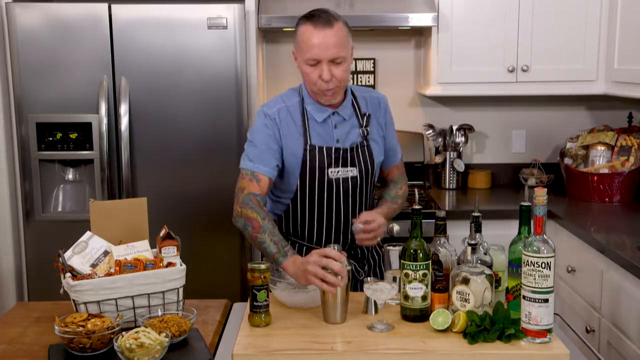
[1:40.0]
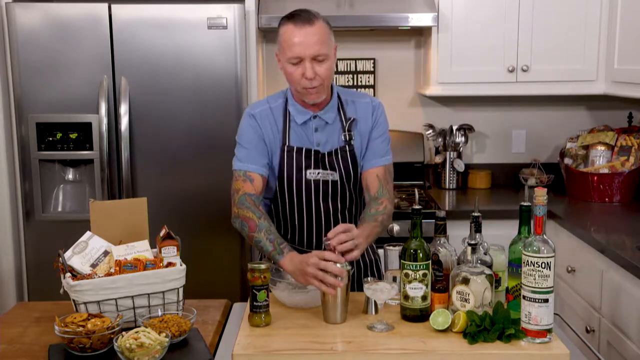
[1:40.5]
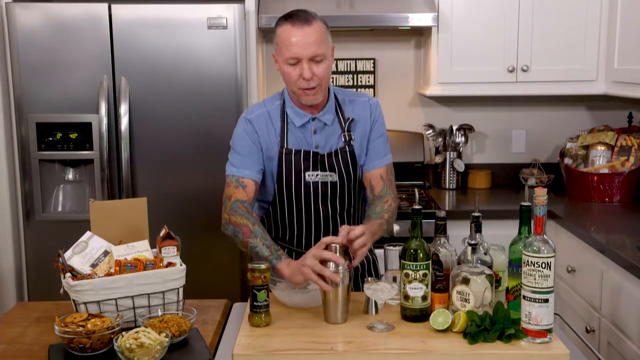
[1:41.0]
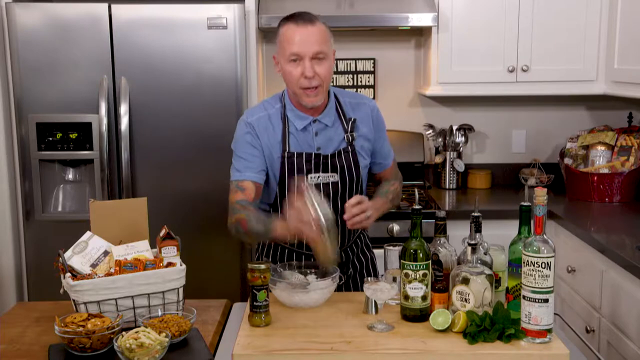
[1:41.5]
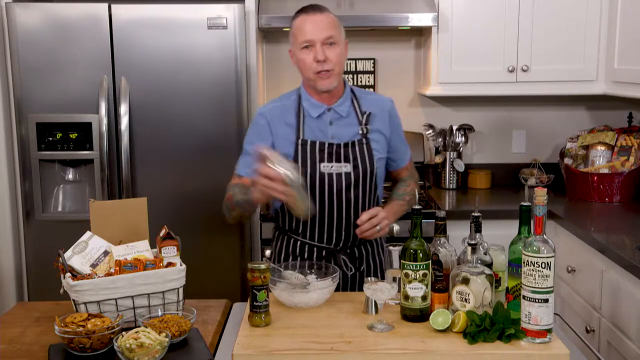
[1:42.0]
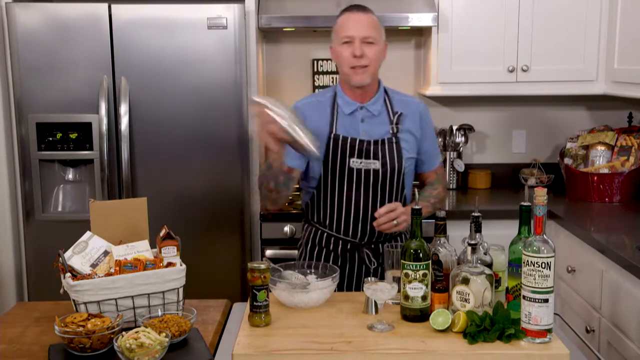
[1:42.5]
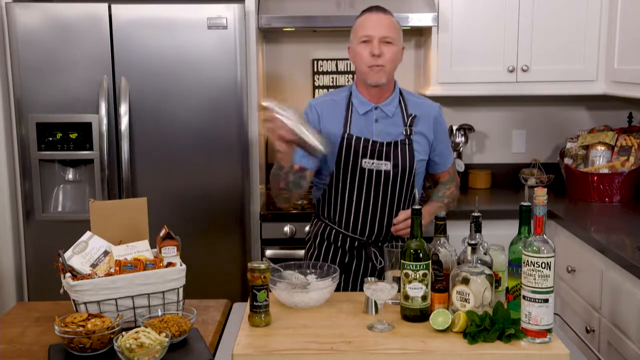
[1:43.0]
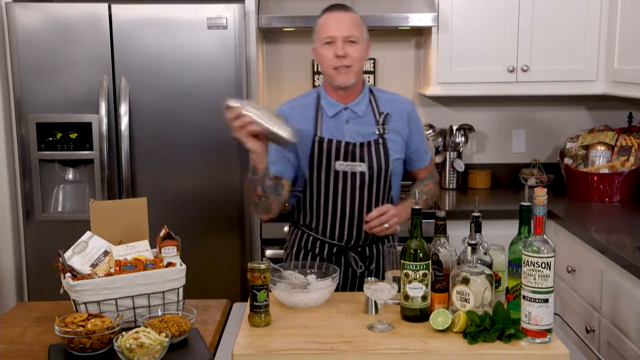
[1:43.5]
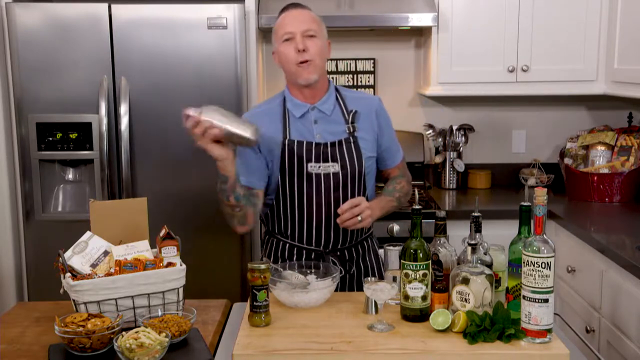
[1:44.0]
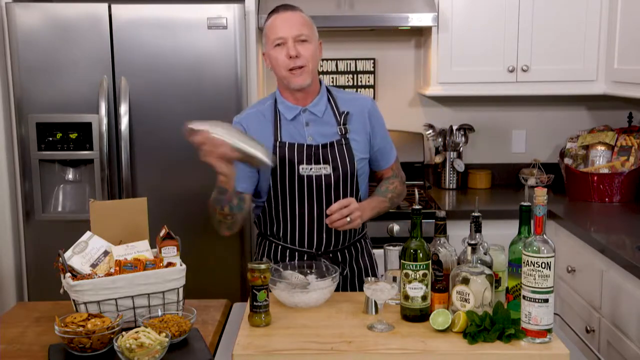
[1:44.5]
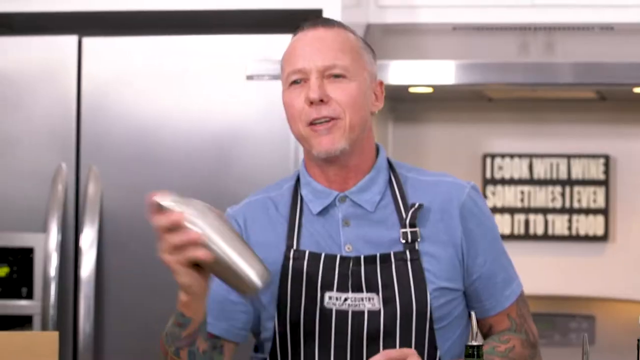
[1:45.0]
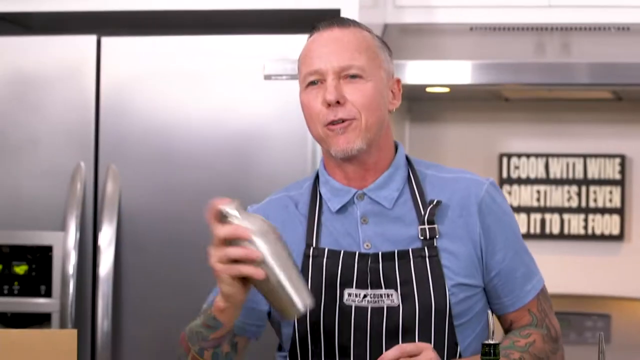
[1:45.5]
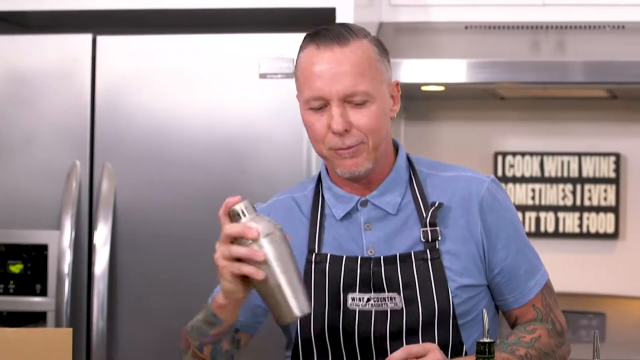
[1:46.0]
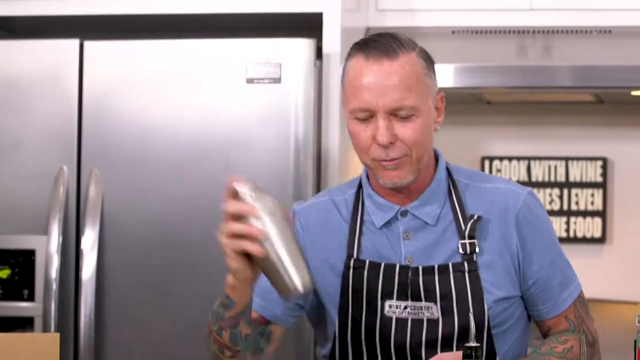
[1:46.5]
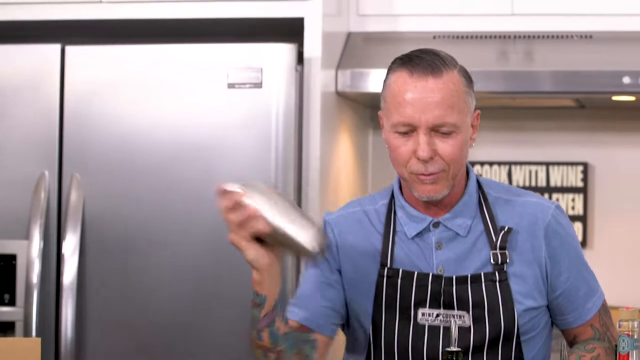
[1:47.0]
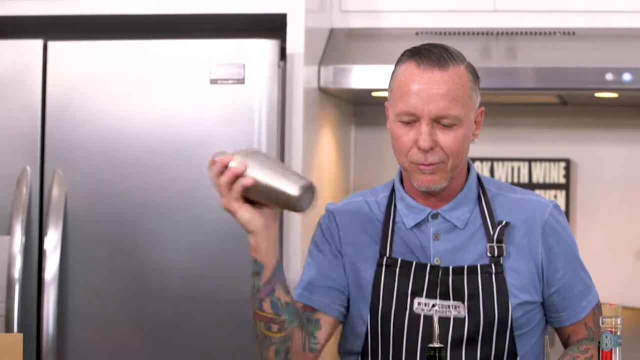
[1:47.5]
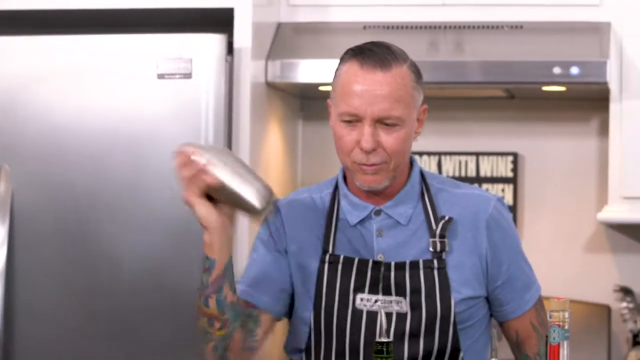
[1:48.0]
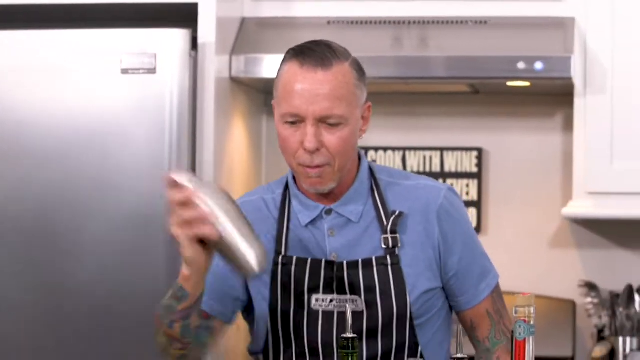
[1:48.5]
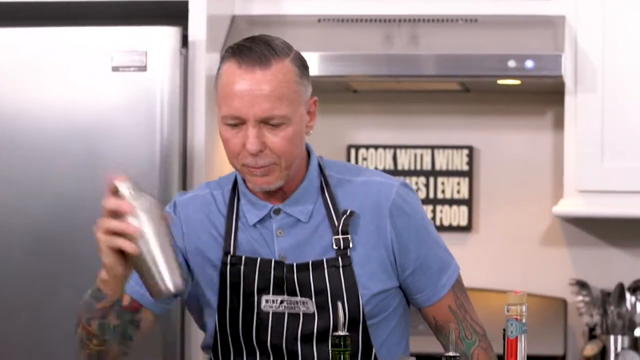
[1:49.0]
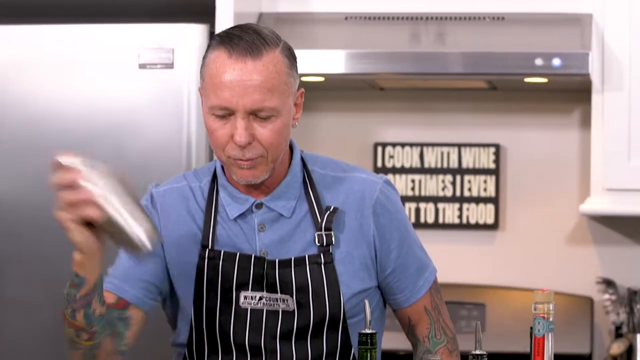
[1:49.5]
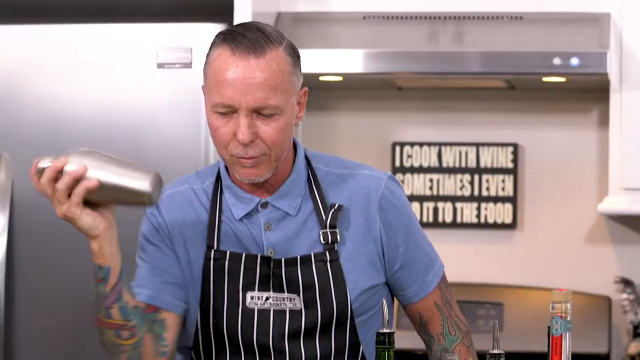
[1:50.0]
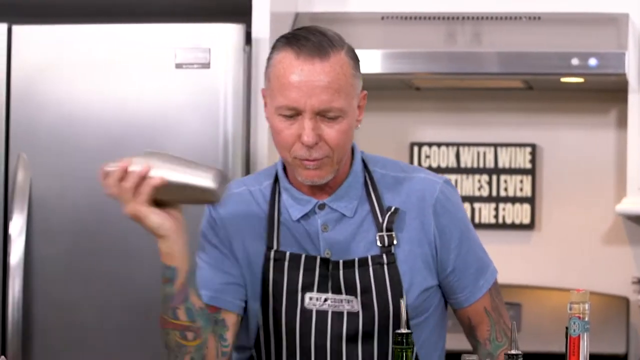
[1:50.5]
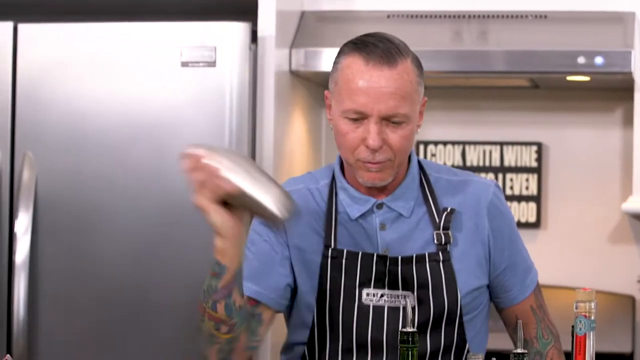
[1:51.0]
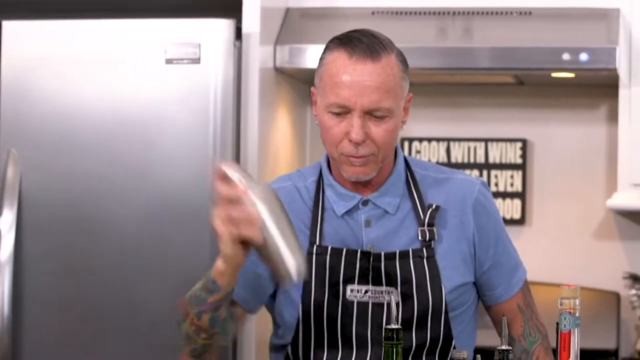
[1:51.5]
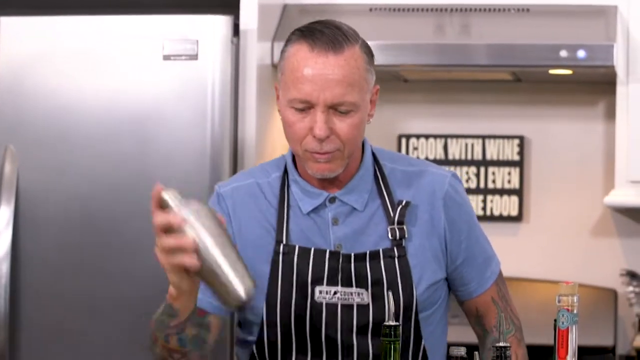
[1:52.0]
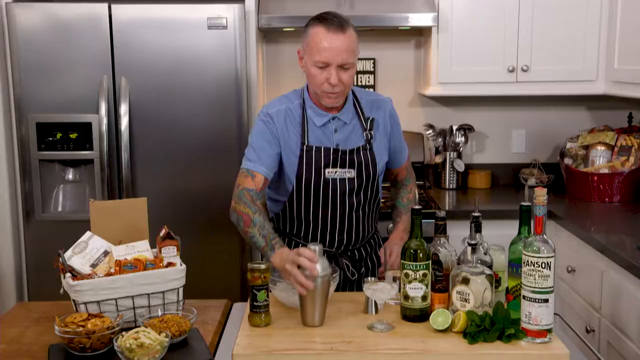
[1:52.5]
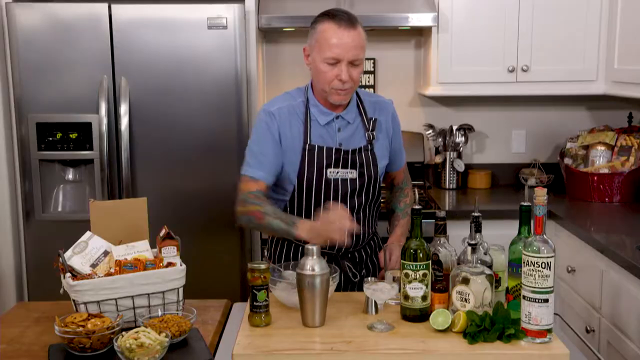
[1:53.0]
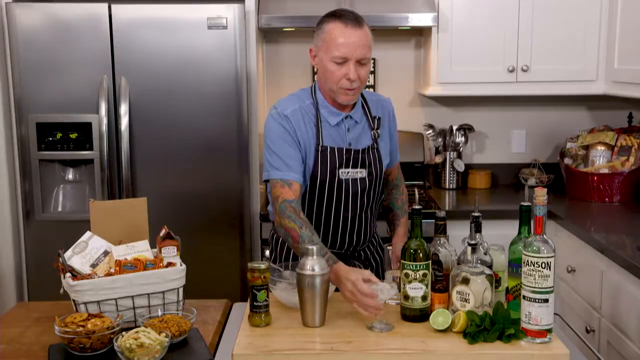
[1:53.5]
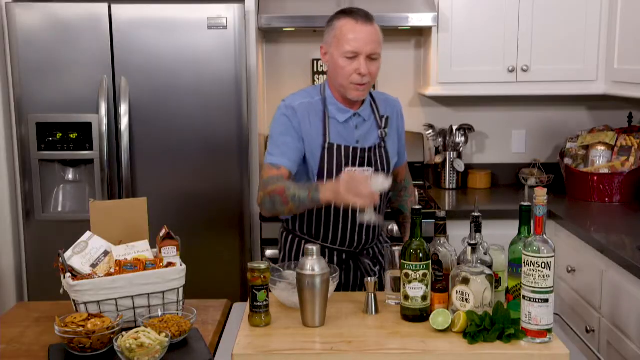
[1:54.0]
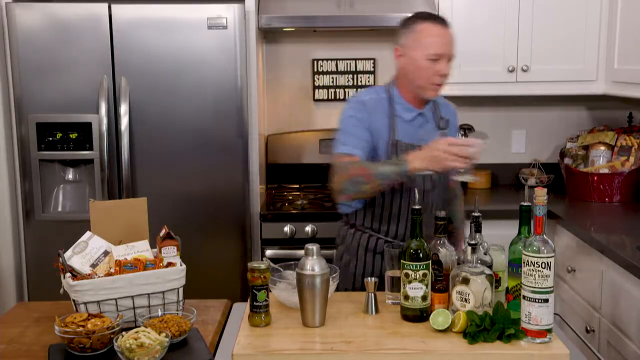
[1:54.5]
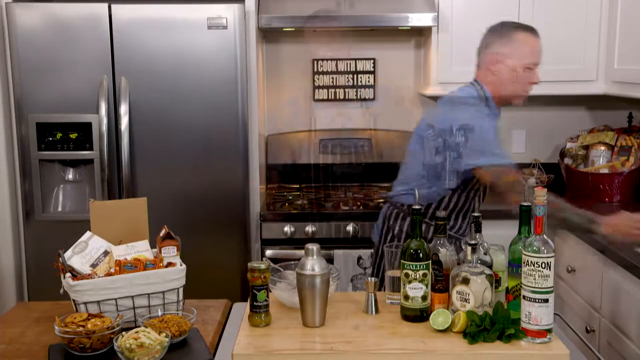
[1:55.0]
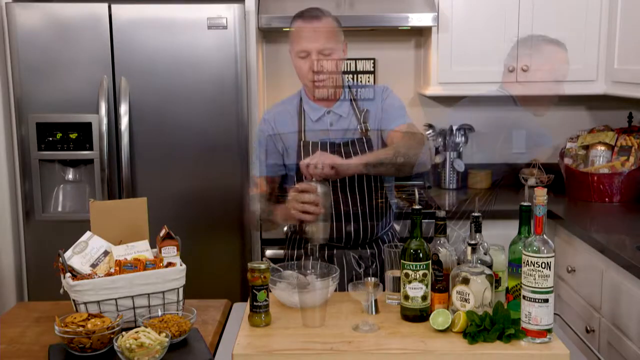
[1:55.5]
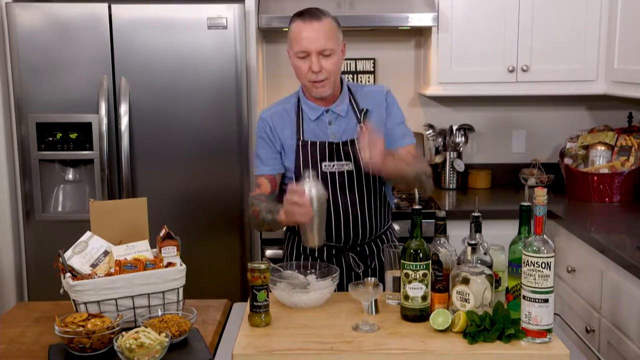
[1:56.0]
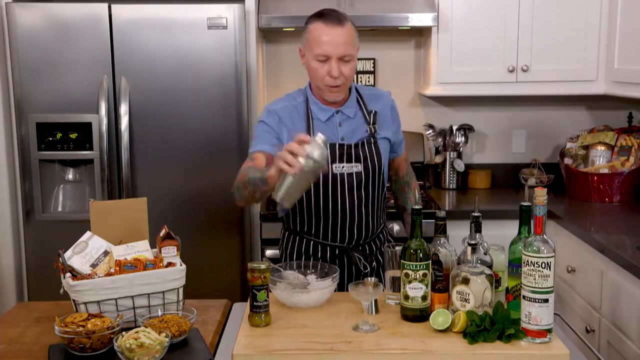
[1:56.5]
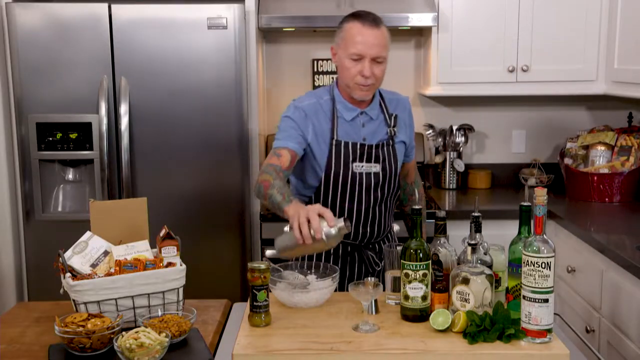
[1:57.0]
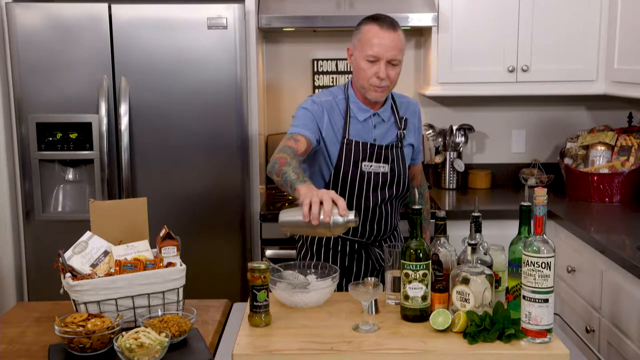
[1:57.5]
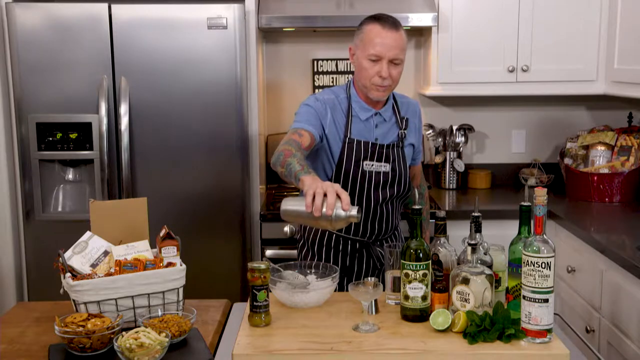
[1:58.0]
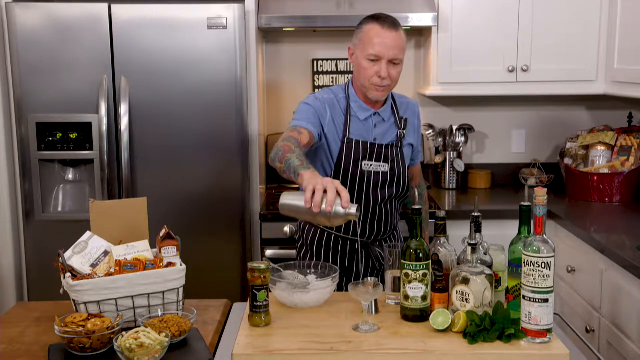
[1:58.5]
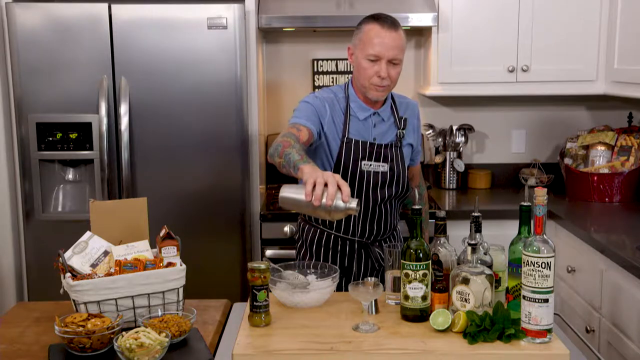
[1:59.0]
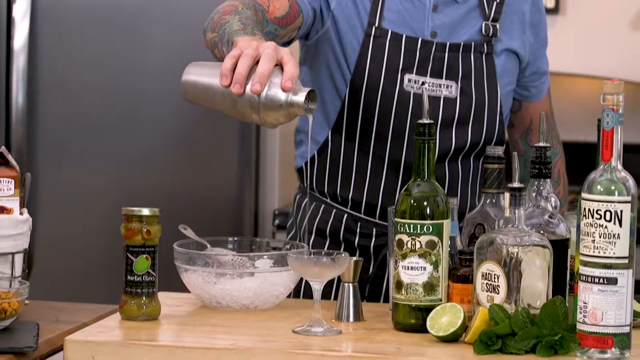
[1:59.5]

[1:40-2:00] The man, who could be in his early 40s, looks strong and healthy. His apron has some writing on the chest, but it cannot be read. He grabs the metal tumbler and shakes it while talking, starting slowly and then increasing the pace. He then takes another glass and moves it from the counter where he is preparing the drink to the top of the kitchen counter. There is also a bottle that seems to have something green in it, apparently a mixture of vegetables, with greens and reds.